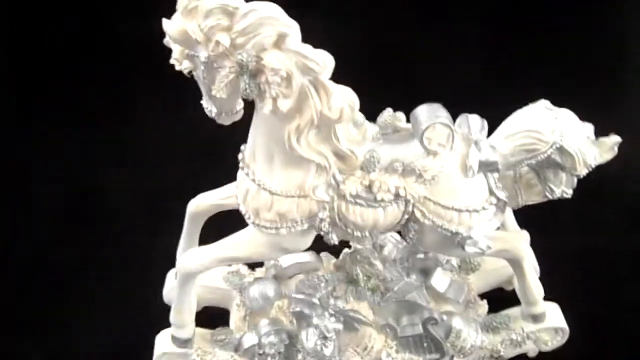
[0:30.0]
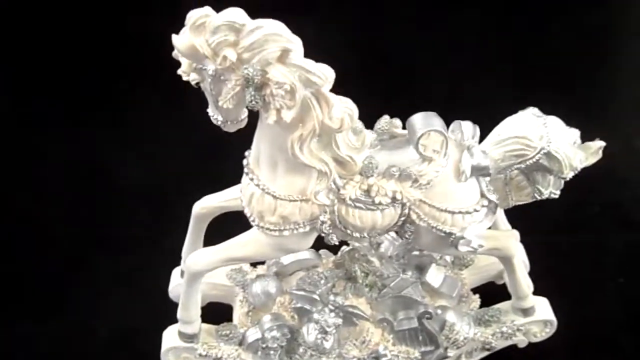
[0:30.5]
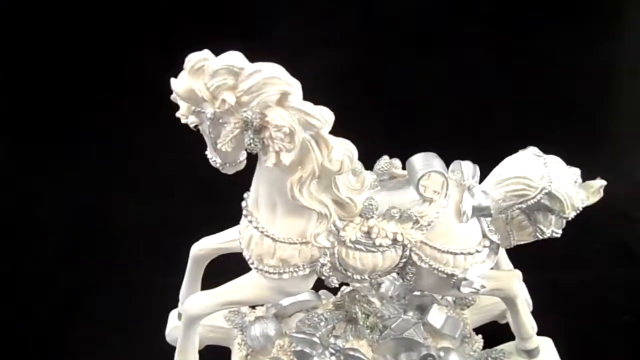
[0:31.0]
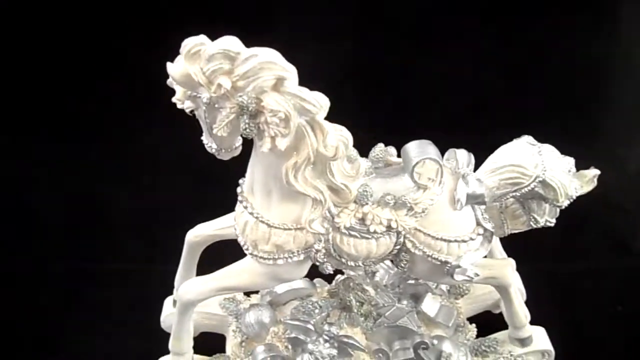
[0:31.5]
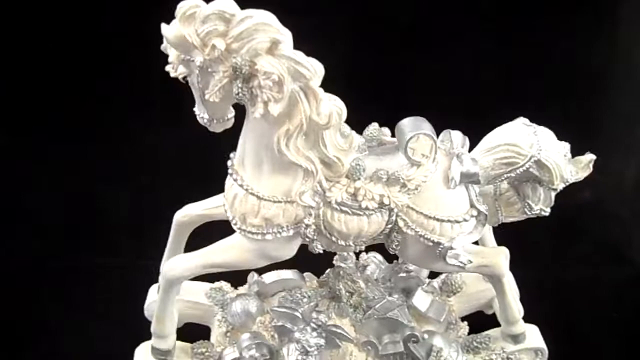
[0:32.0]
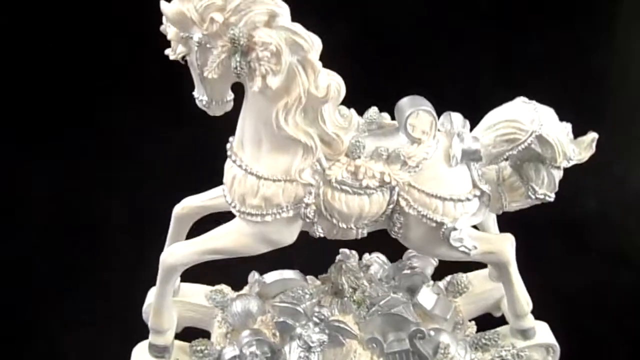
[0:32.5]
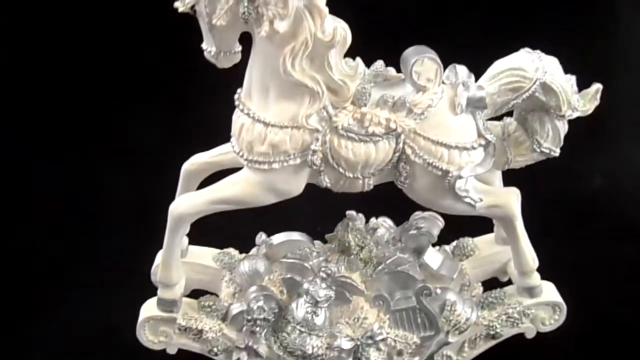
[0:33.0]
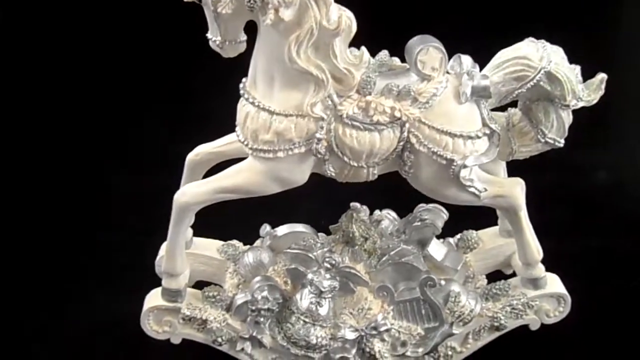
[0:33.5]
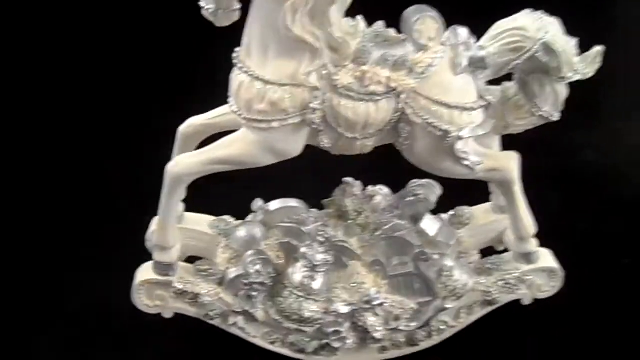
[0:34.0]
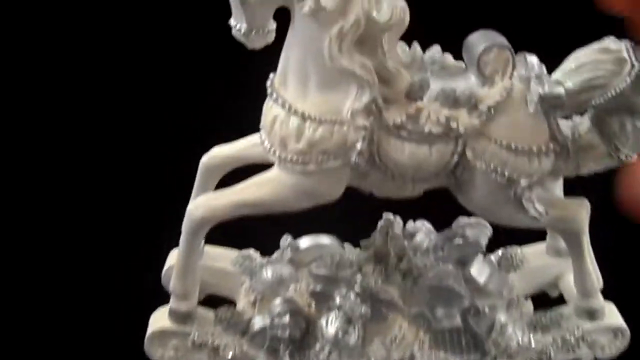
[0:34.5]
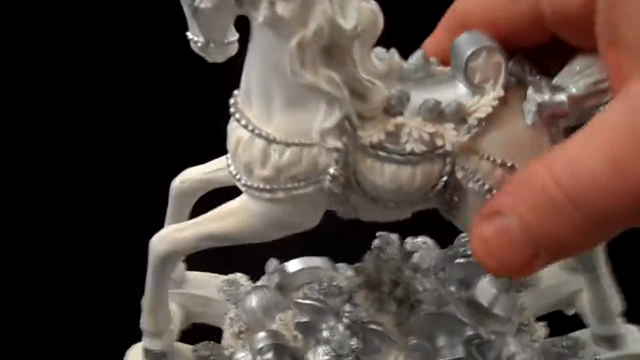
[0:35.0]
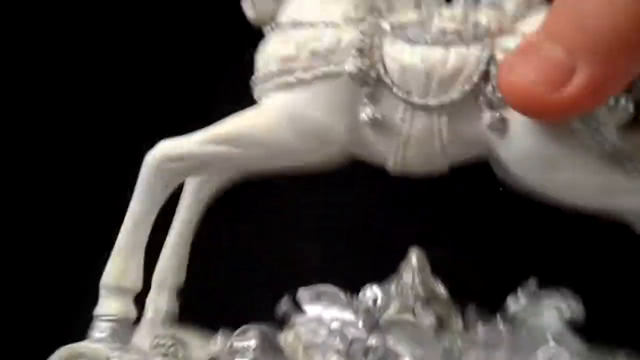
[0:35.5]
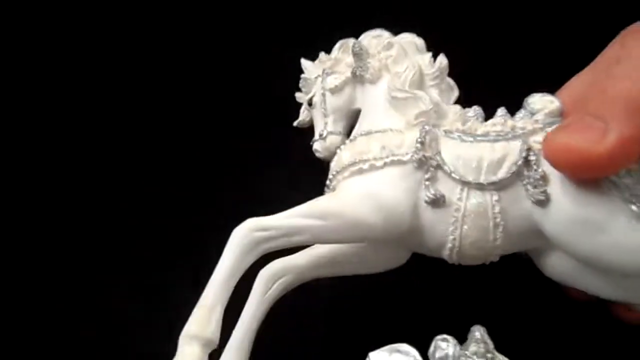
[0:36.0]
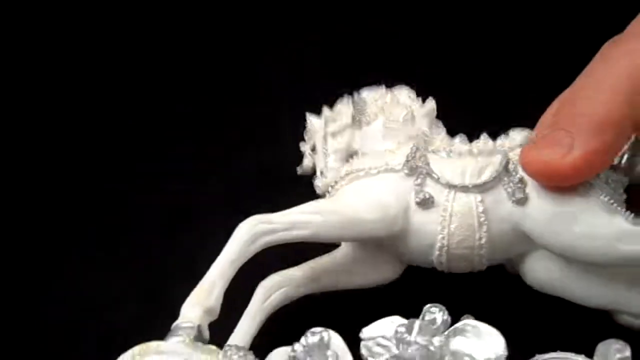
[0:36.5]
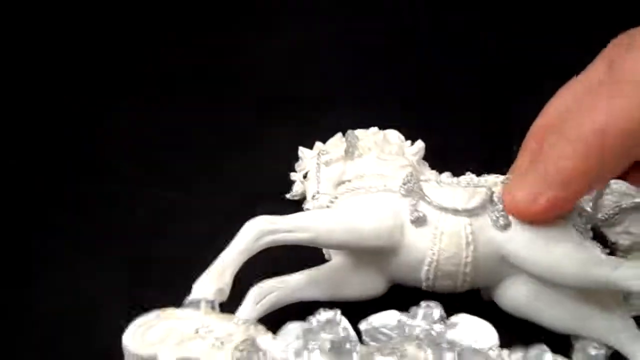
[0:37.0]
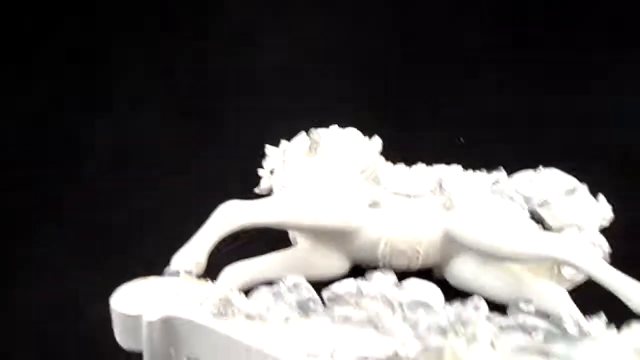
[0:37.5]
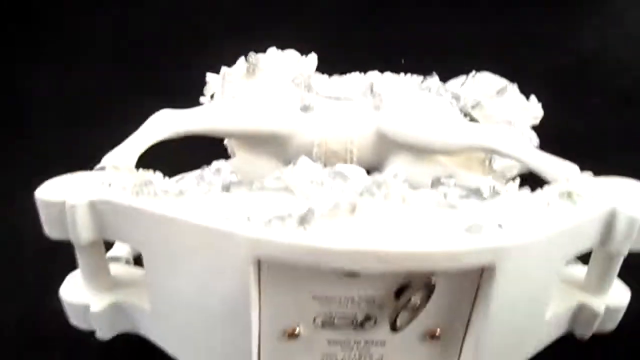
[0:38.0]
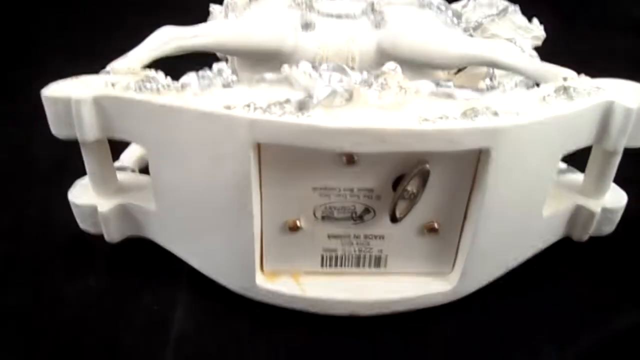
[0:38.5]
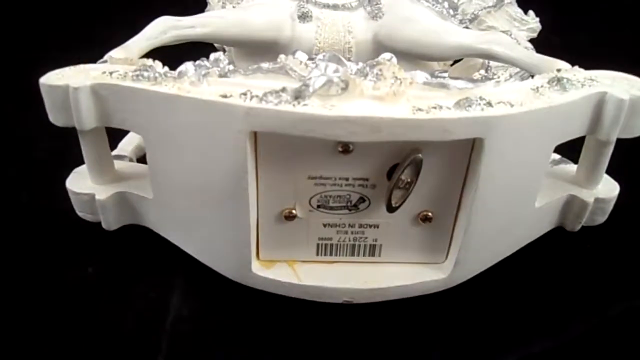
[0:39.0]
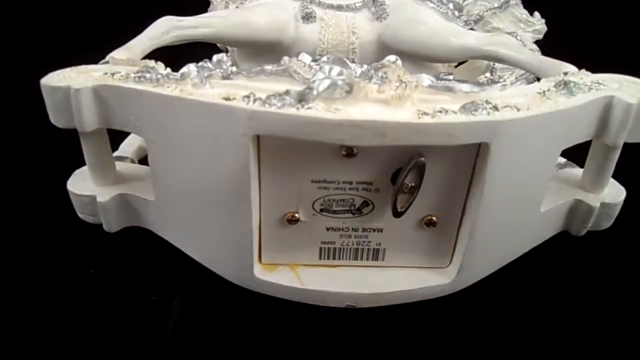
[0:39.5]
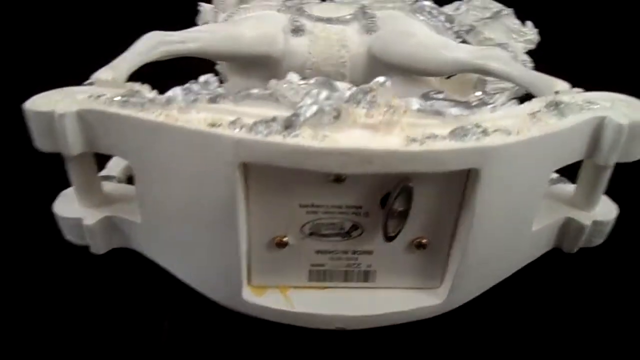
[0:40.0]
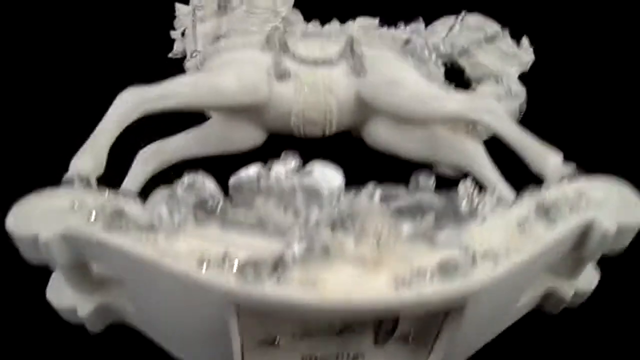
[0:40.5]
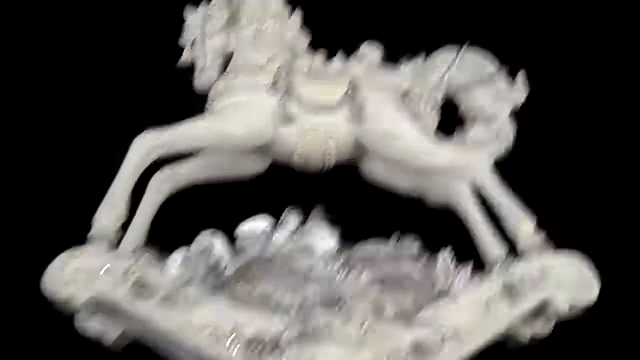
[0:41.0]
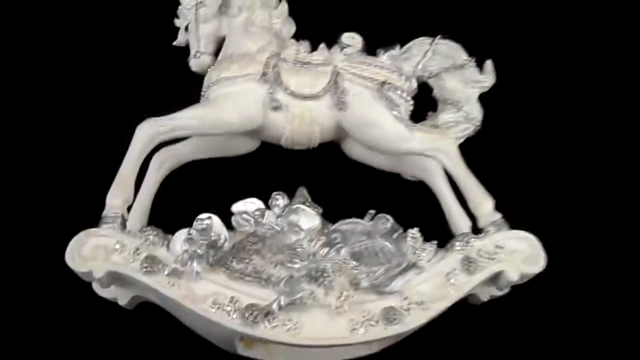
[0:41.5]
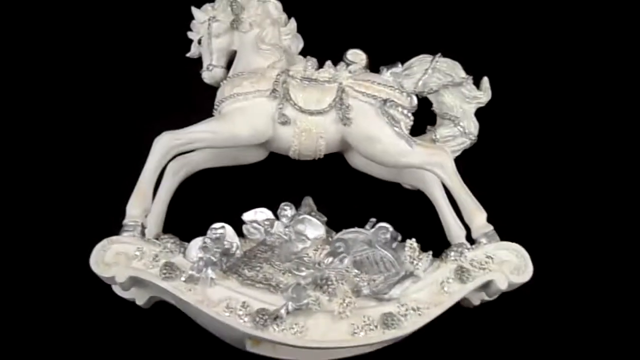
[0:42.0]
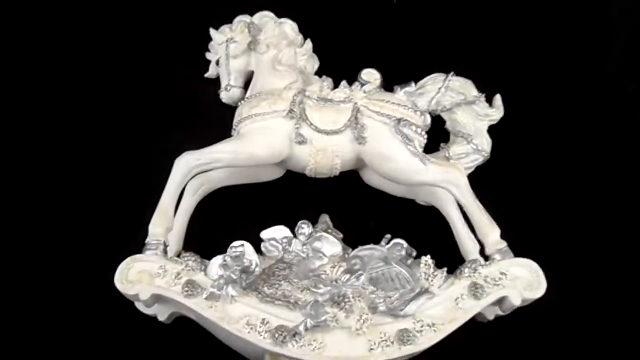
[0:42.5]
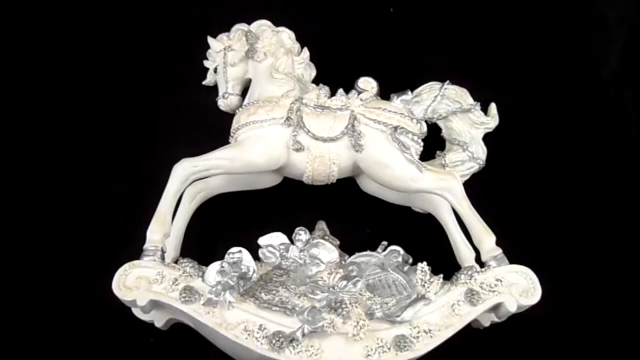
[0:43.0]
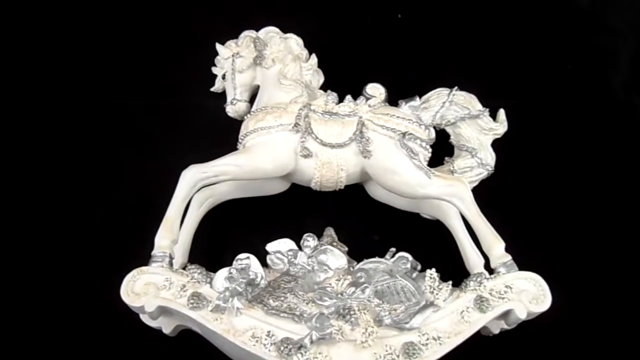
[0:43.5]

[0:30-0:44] The collectible is seen from a top-down or top-side view. The cameraman picks it up again and turns it over onto its side, revealing the bottom, which shows it is part of a music box or is a music box. On the bottom there is a barcode, a winding metal piece for winding the music box, a logo from the company that manufactured the piece, and two screws holding the battery cover in place. Everything else looks like it is in pristine condition. The camera pans up to show the horse on its side.